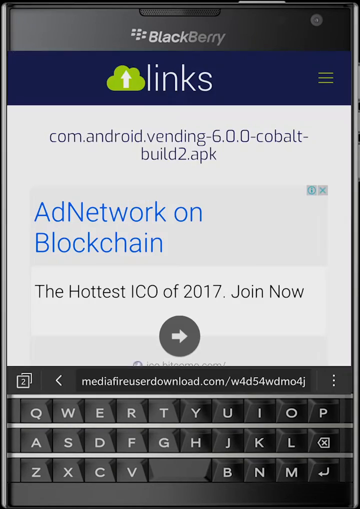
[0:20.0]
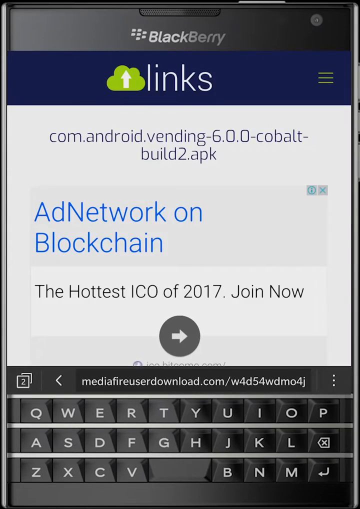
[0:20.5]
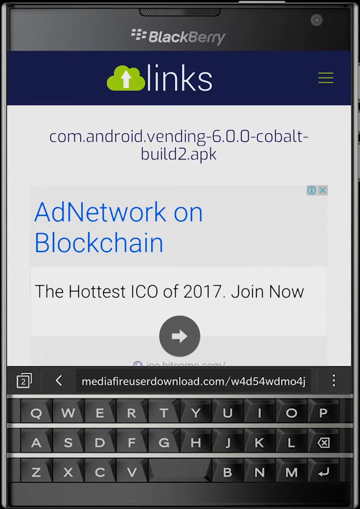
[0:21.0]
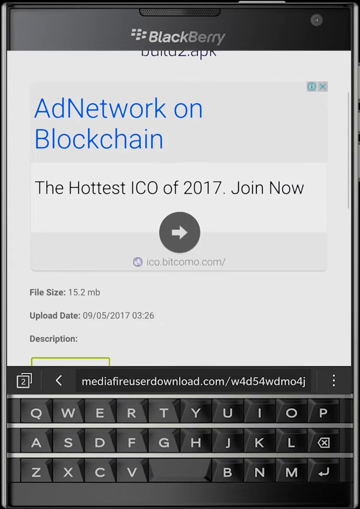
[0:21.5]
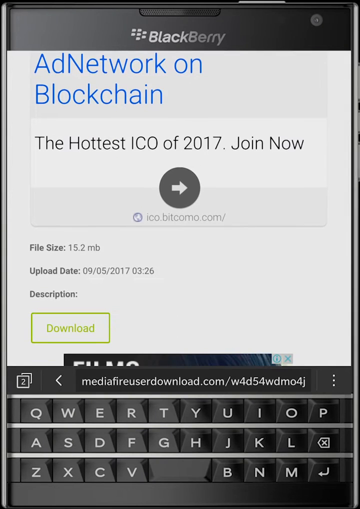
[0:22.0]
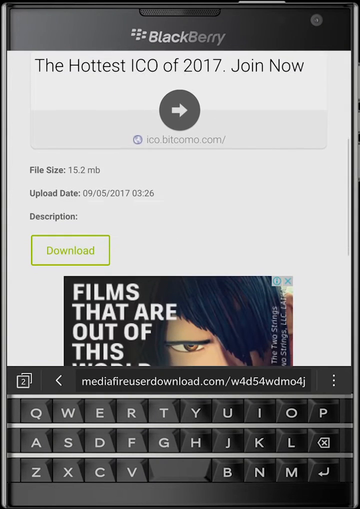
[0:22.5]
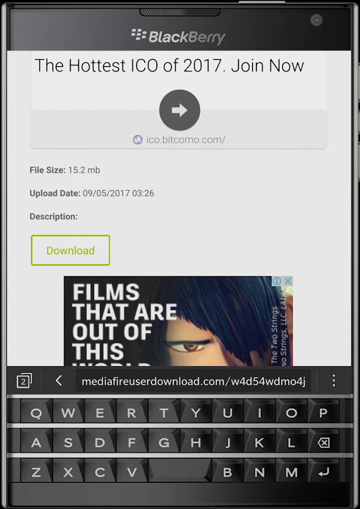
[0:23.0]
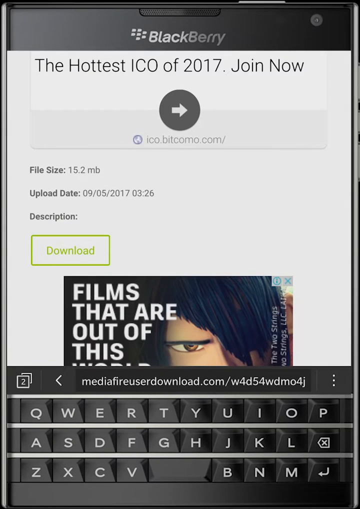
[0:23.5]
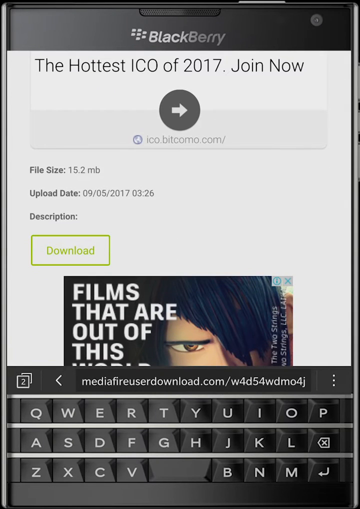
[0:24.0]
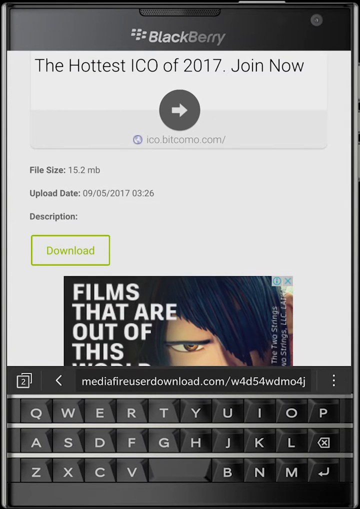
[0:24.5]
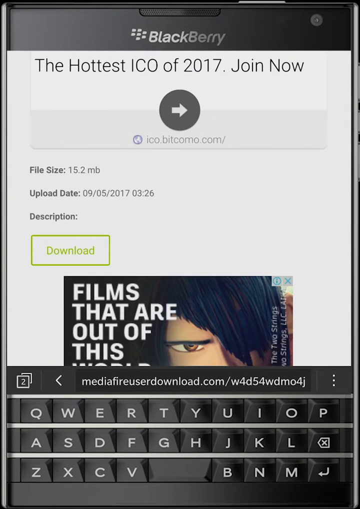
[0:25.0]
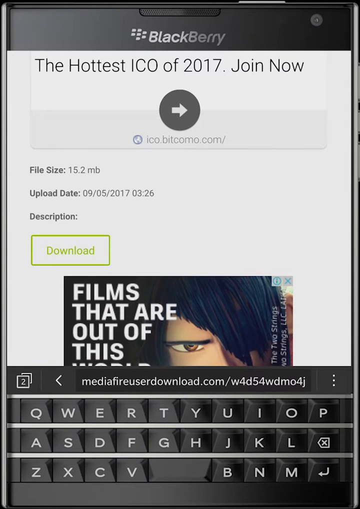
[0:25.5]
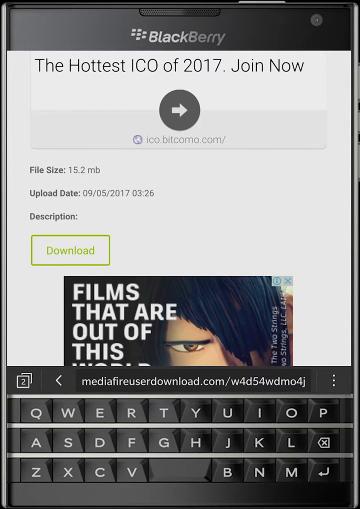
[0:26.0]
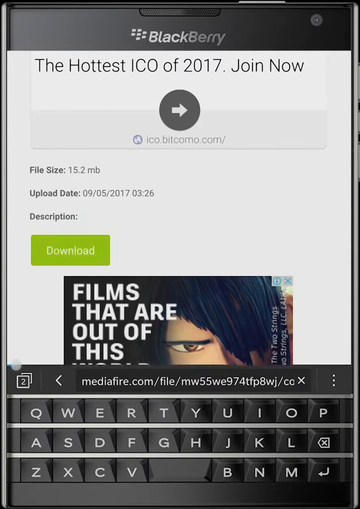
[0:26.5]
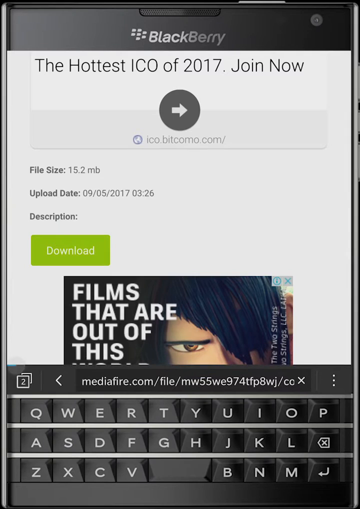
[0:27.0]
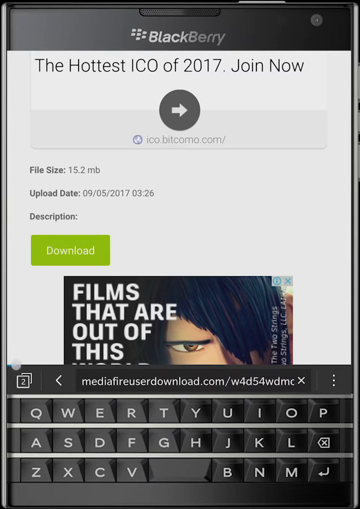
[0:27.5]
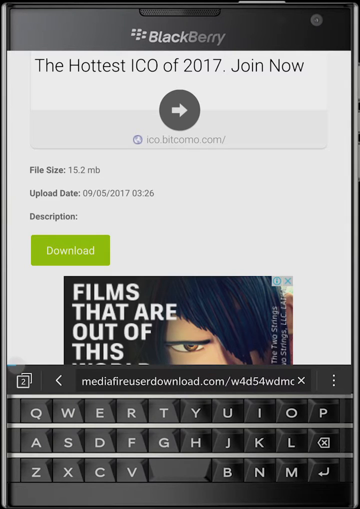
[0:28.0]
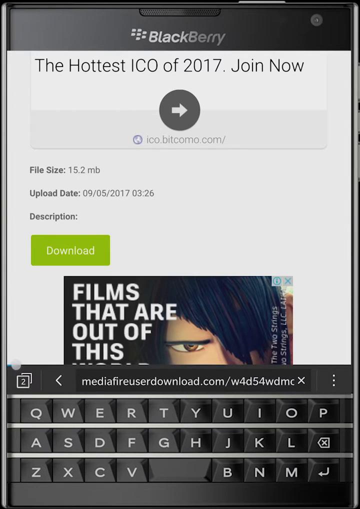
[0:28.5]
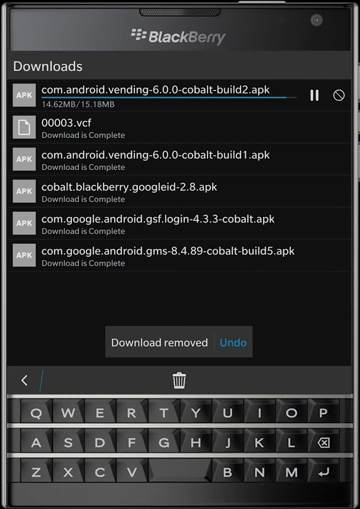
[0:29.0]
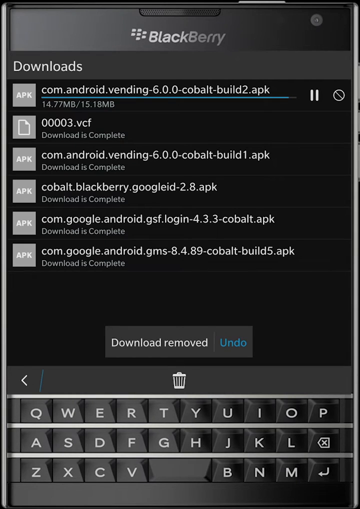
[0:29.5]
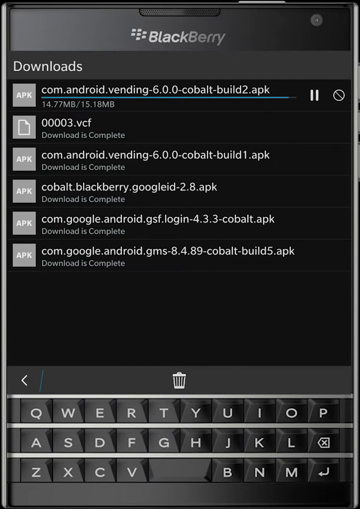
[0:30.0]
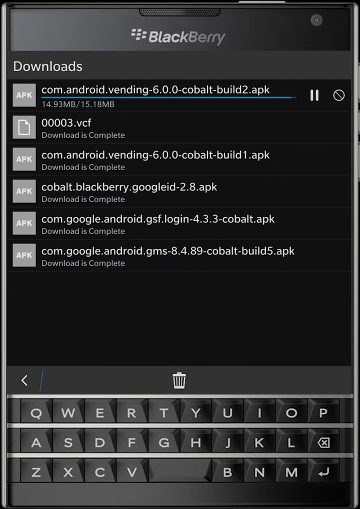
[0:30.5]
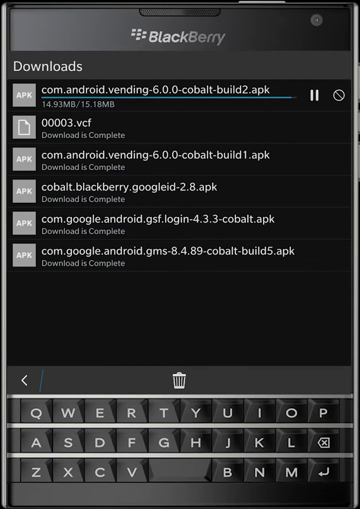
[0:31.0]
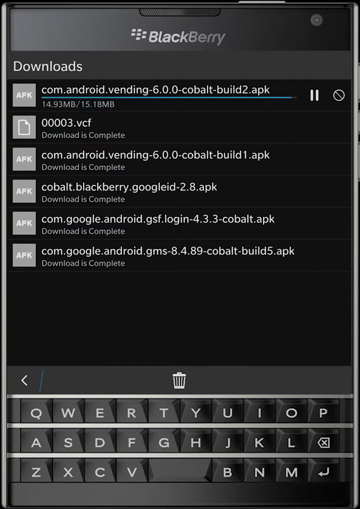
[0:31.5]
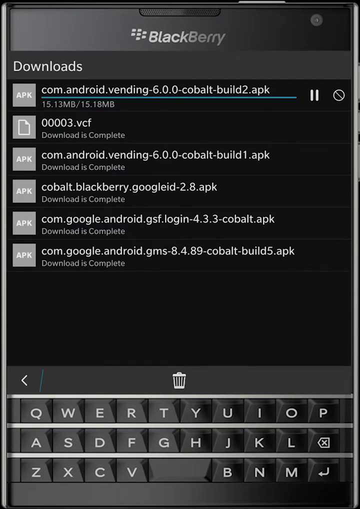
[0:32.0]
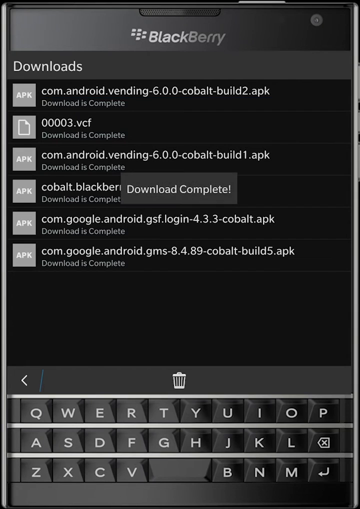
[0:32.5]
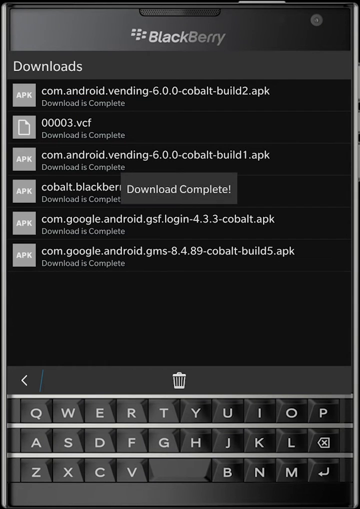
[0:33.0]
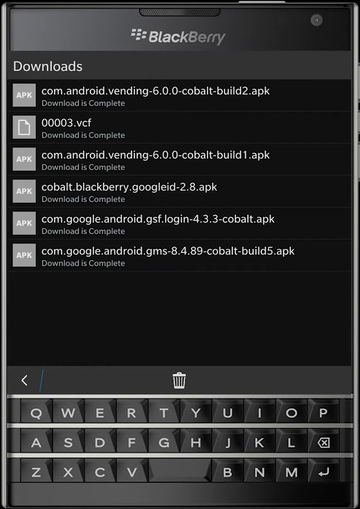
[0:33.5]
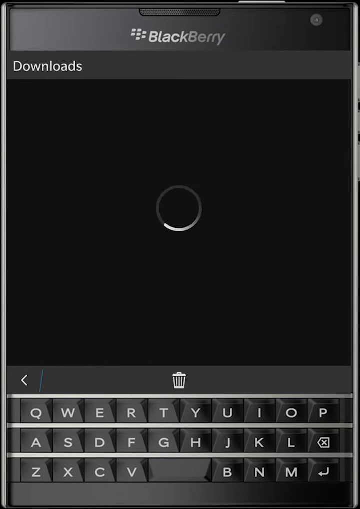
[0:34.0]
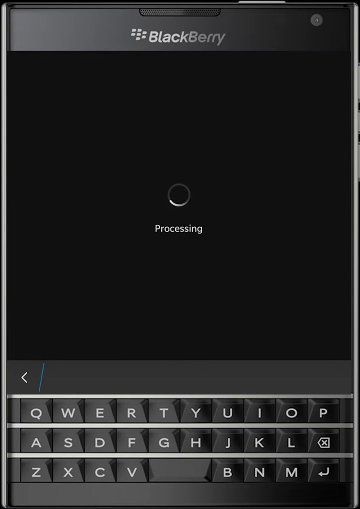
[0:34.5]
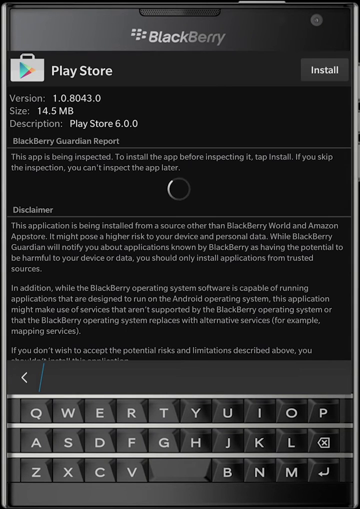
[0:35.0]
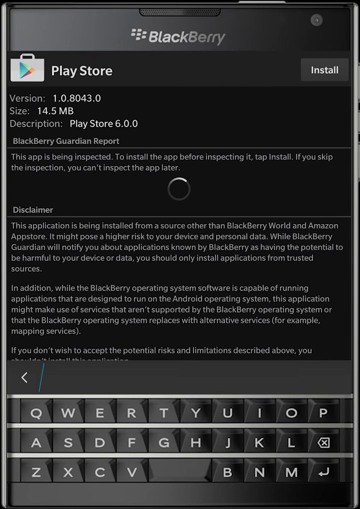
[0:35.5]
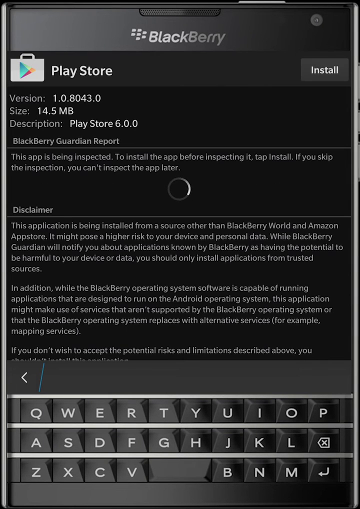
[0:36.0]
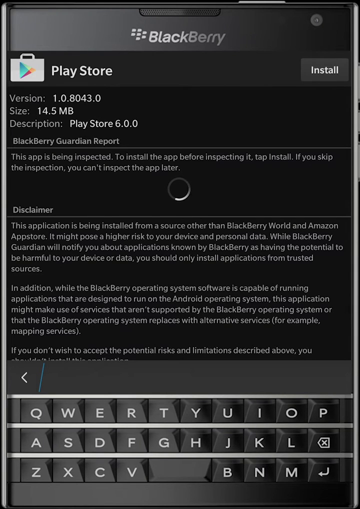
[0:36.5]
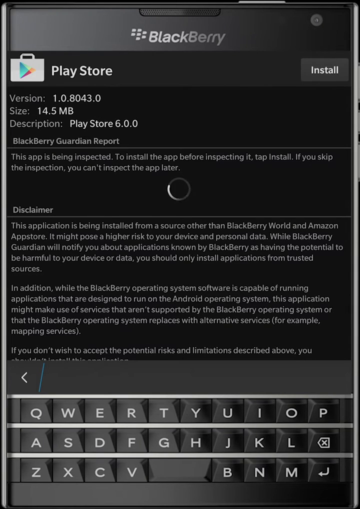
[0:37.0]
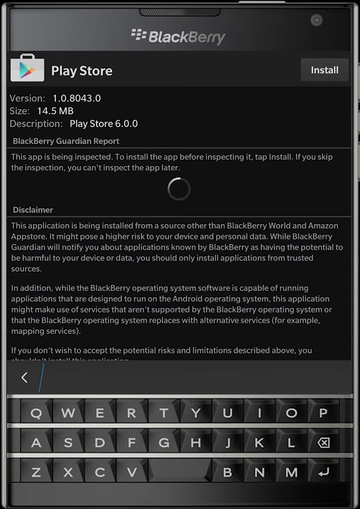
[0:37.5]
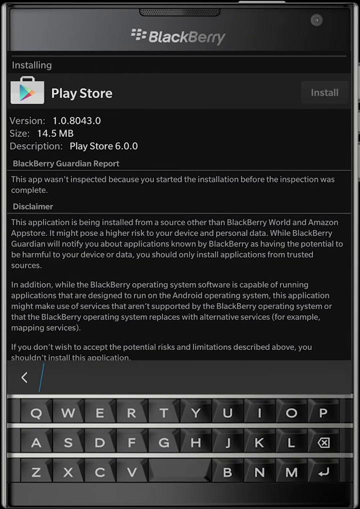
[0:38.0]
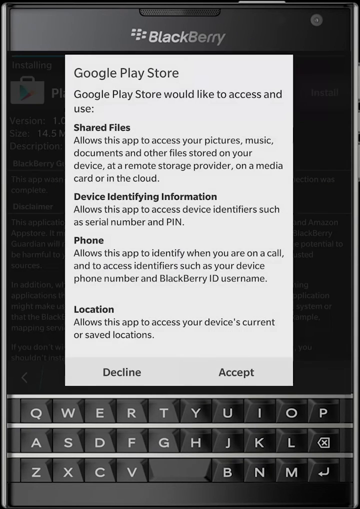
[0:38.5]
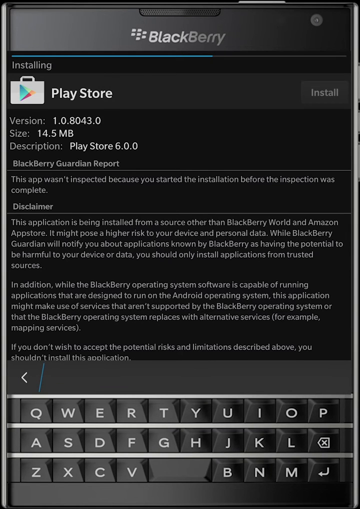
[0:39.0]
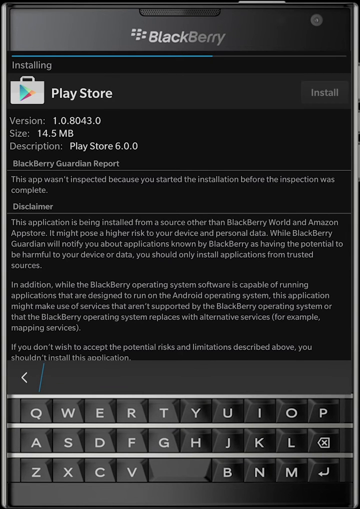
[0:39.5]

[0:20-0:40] The user visits a website to download the Play Store, navigates to the download section and clicks the download link. The download starts, saving an APK file to the device. The user then goes to downloads in the settings, finds the downloaded file and clicks it to start the installation. The device asks for permission to install the app, and the user grants the necessary permissions. The installation is in progress and still loading. The Play Store is then on the device, and the user goes to open it and sign in to their account.